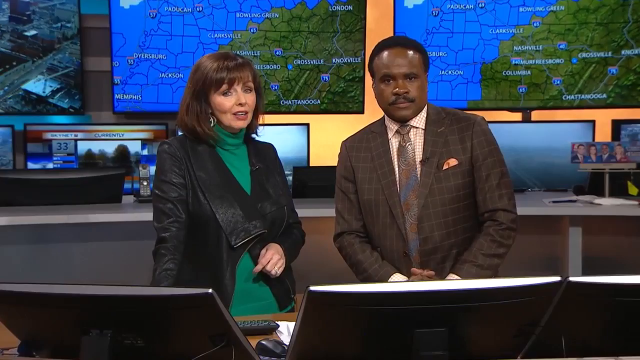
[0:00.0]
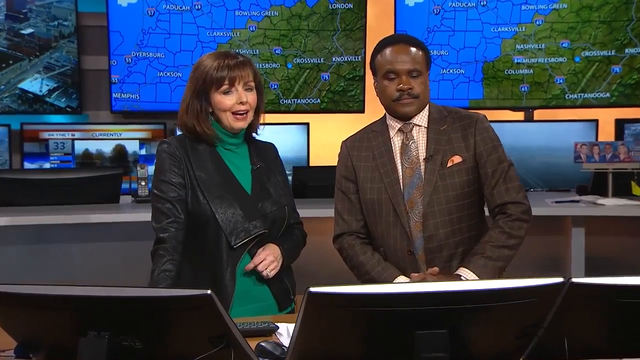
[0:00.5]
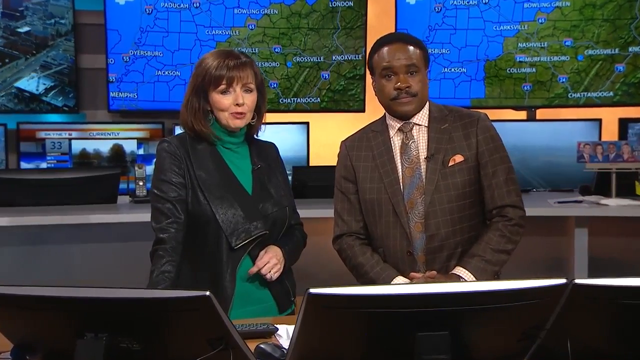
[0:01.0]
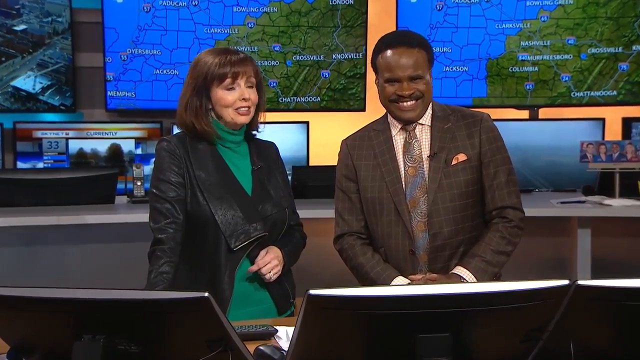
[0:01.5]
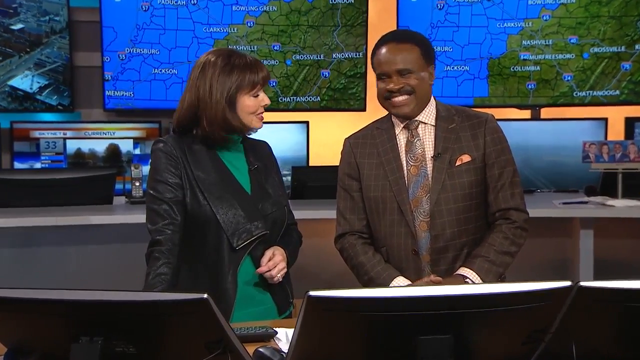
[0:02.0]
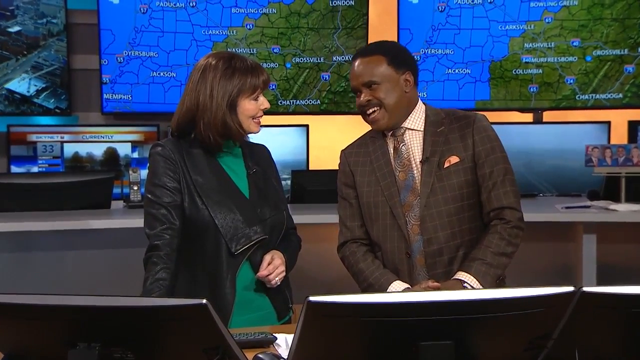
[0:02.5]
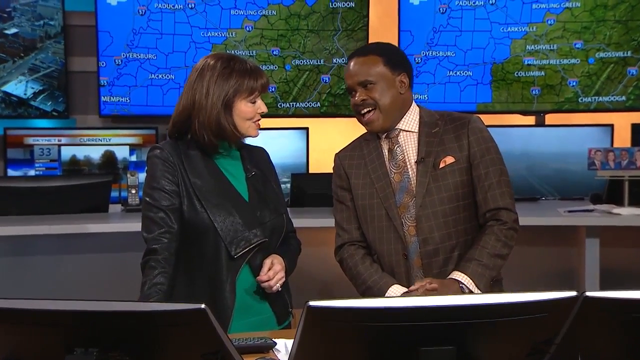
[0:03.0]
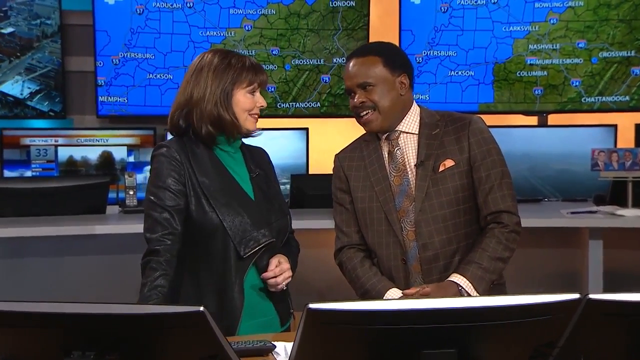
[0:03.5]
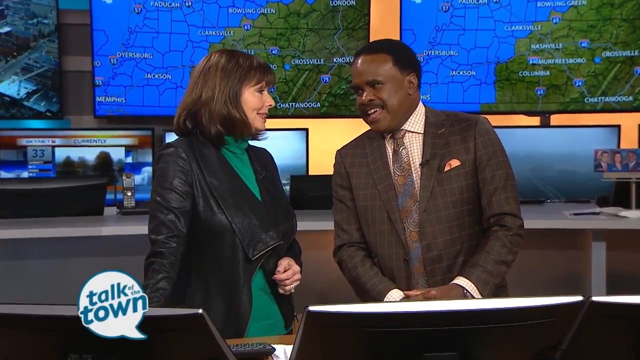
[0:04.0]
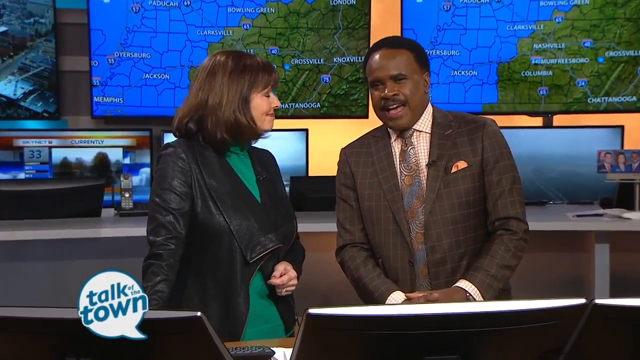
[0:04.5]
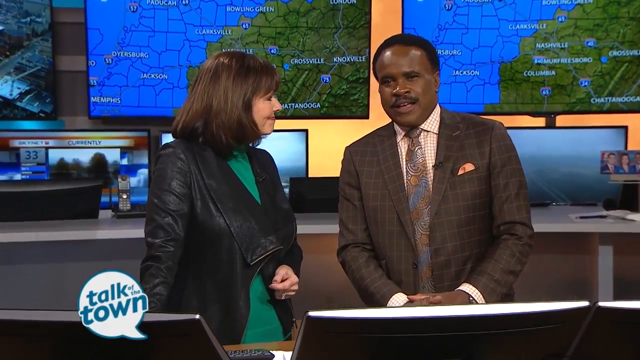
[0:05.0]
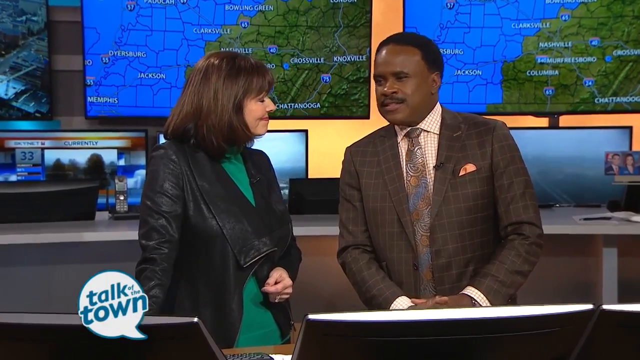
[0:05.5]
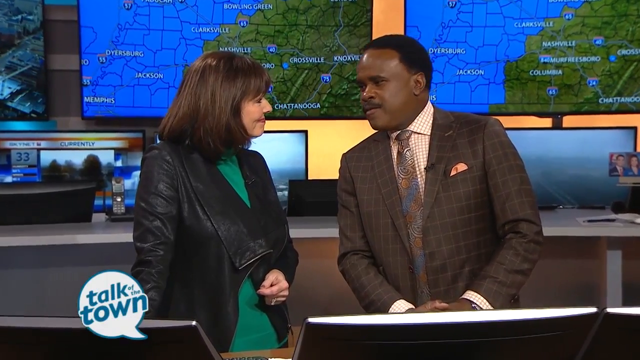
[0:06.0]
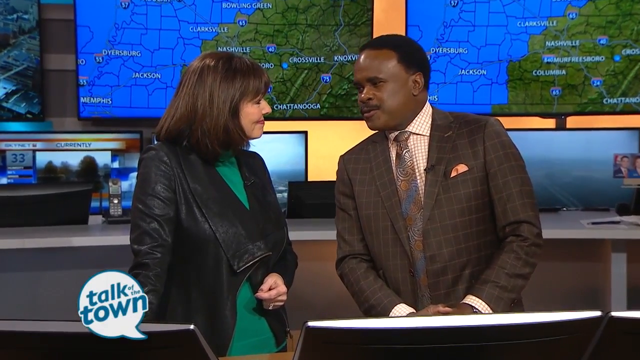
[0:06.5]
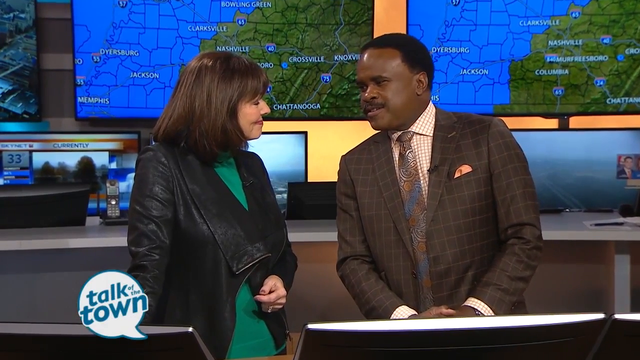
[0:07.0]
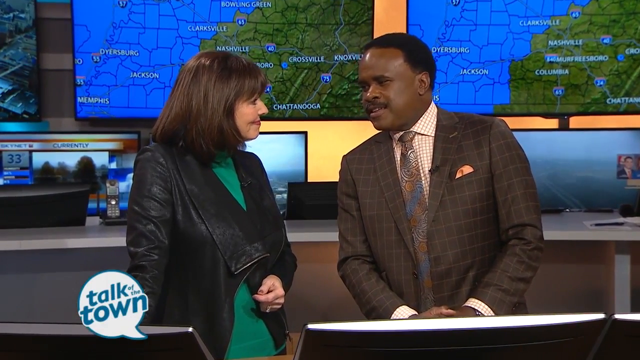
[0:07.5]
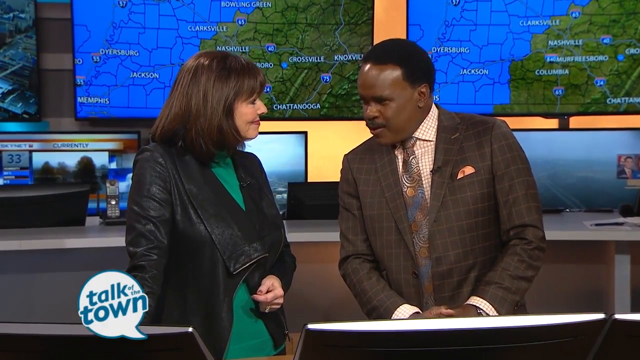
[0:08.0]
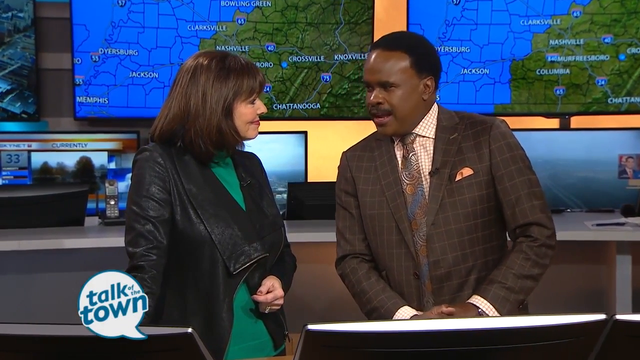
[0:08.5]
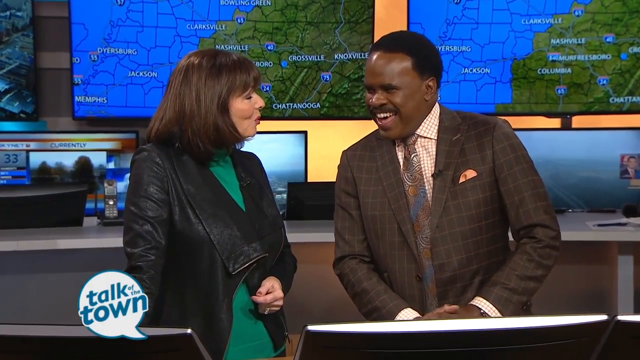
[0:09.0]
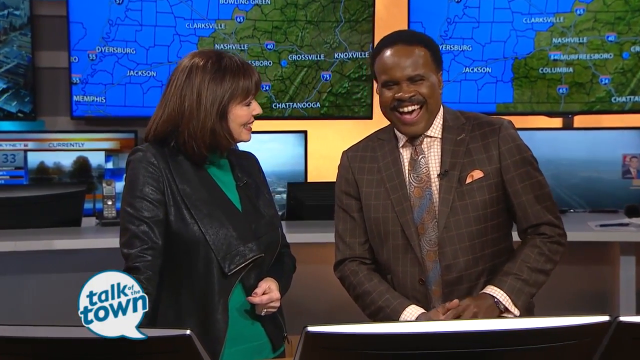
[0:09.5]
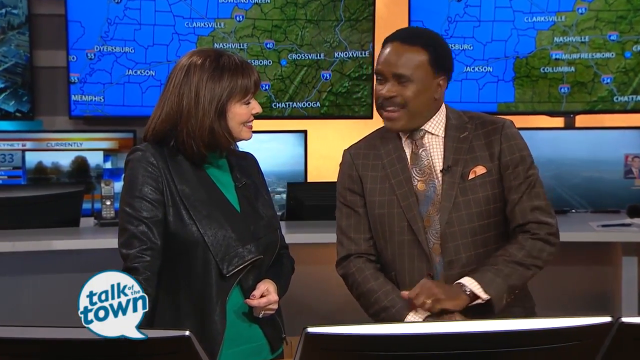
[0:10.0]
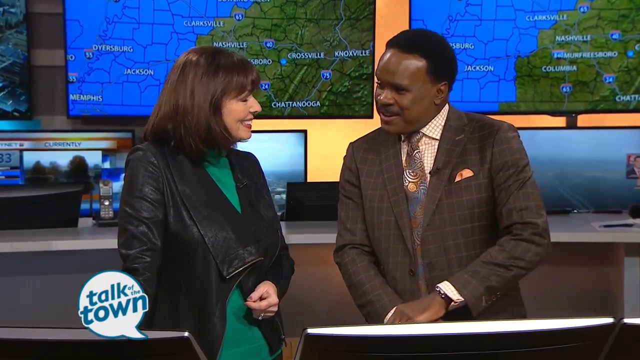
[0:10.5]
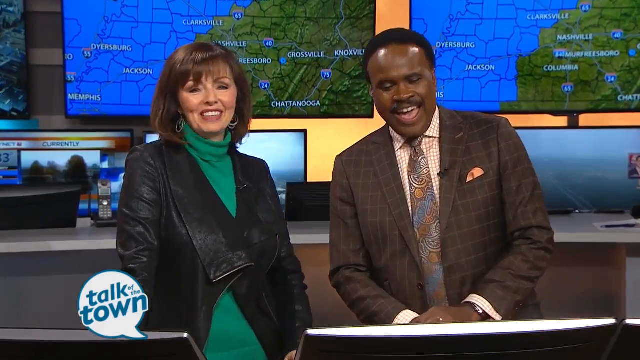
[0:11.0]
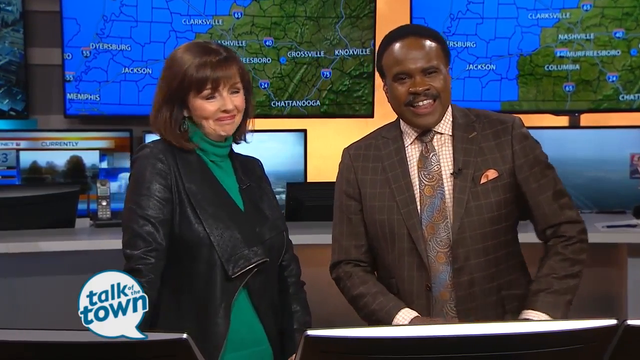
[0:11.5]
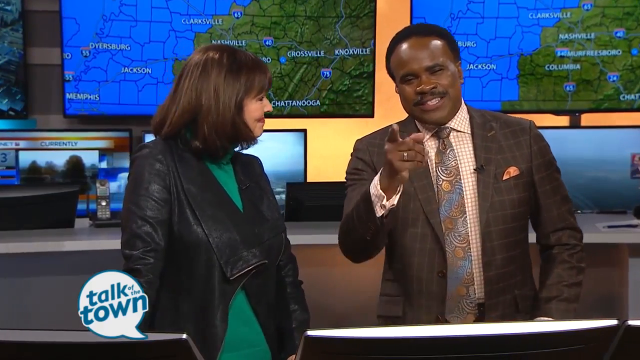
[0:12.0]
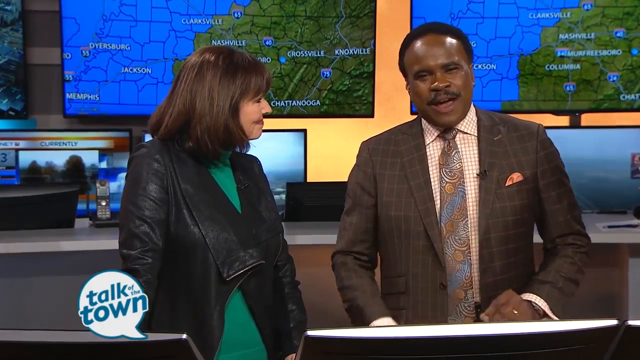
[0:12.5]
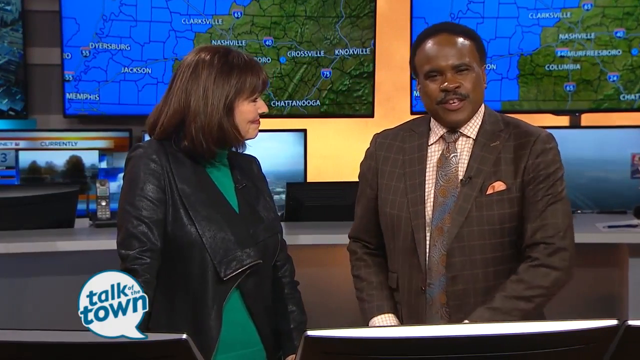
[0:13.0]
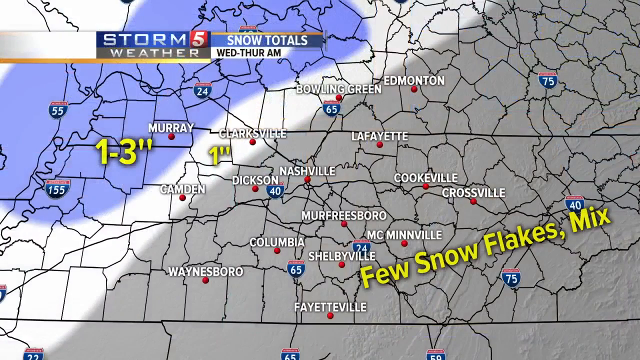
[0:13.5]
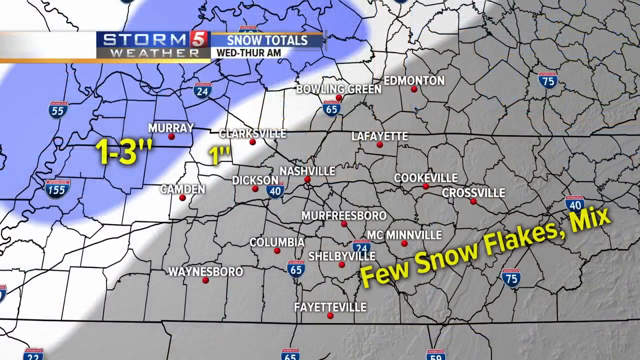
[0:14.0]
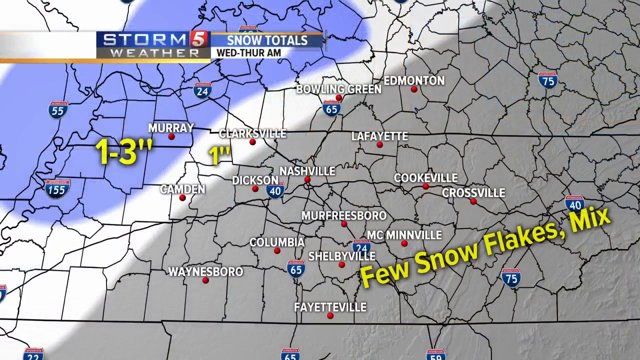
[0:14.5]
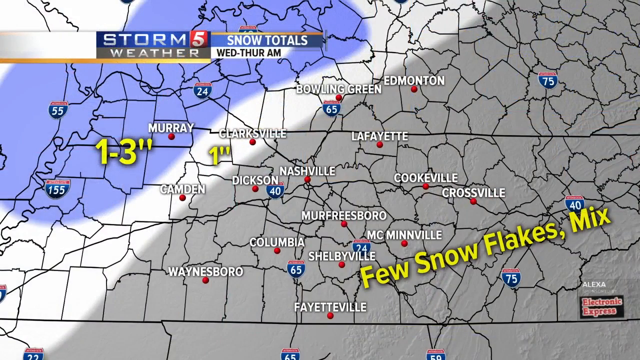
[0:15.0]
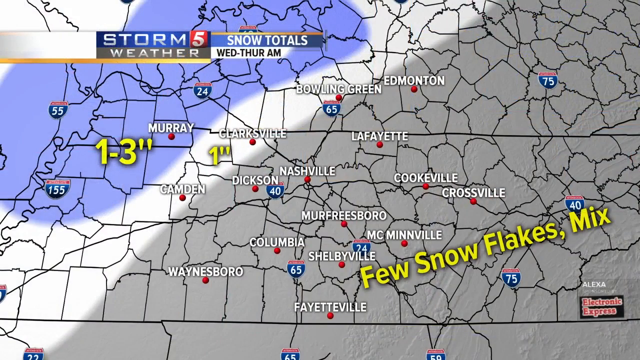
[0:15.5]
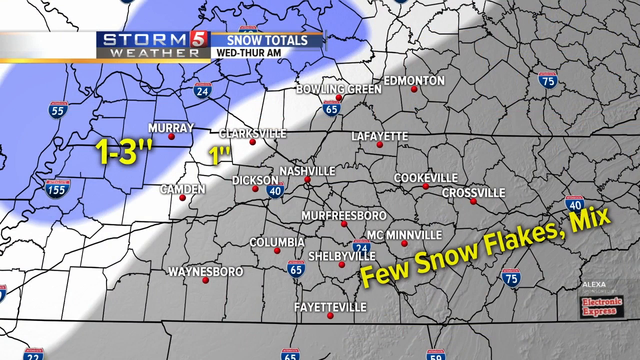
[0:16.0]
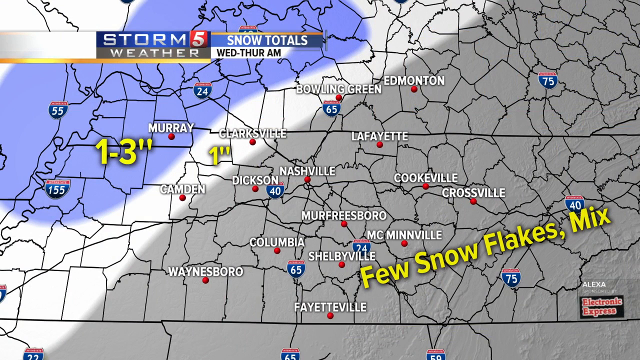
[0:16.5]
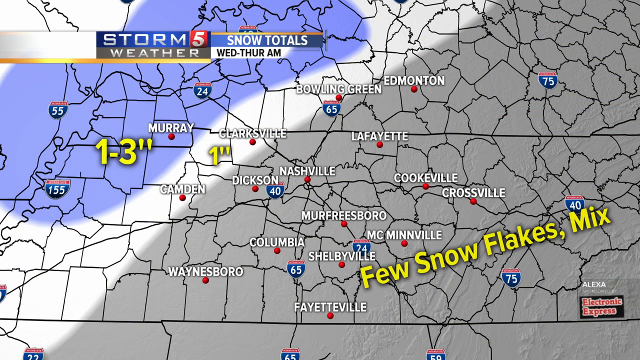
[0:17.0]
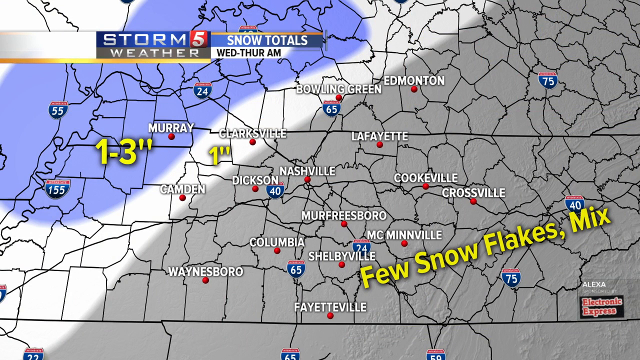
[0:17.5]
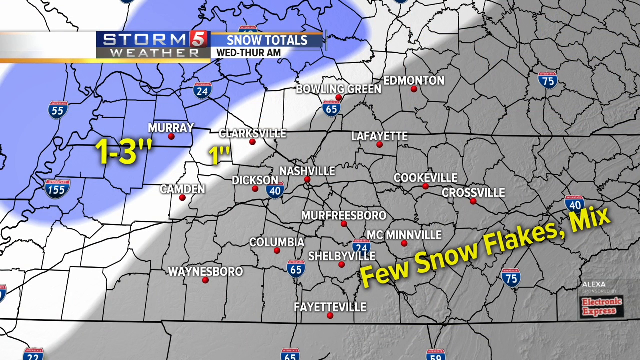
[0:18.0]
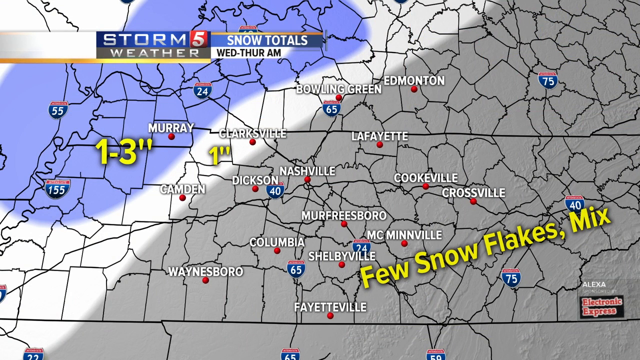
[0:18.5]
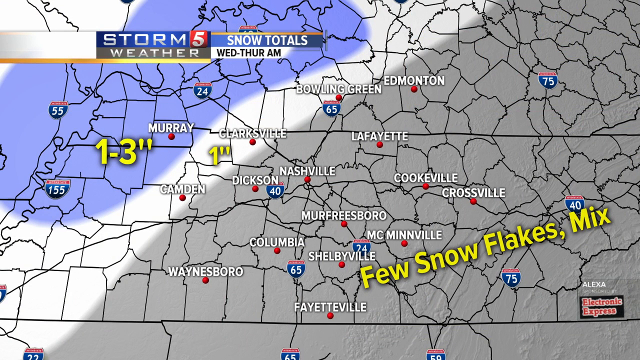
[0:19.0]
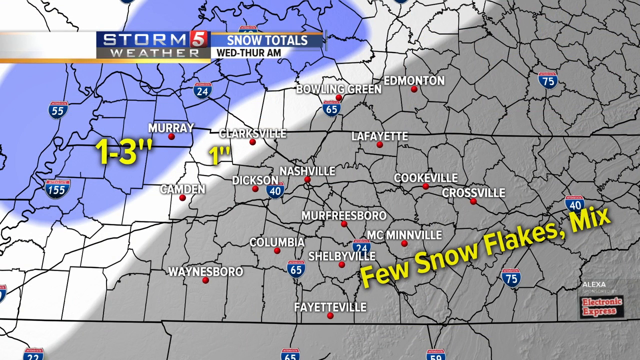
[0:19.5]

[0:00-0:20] Two people in a studio are talking and discussing something: a gentleman in a brown checked suit and a lady in a black jacket and a green dress. They talk to each other with smiles on their faces. In front of them are laptops or desktops. Behind them, a weather forecast appears on two screens, showing stormy weather and snow totals for Wednesday and Thursday a.m., with an amount of one to three inches. The forecast also shows Crossville with a few snowflakes mixed in, along with other areas, and Winslow, with the weather forecast for that area.